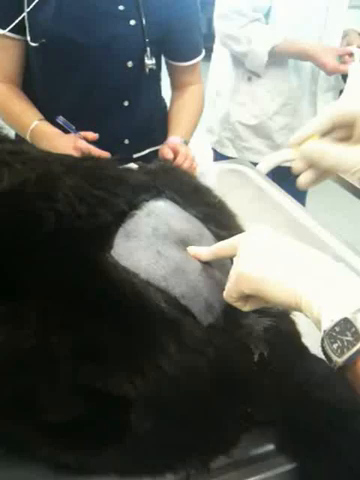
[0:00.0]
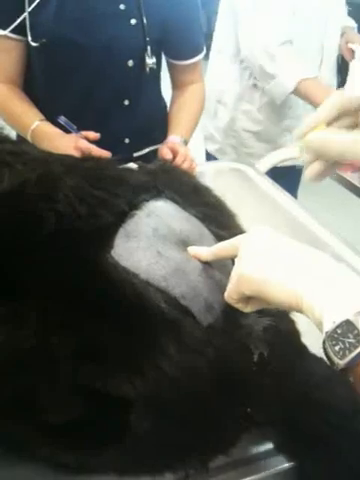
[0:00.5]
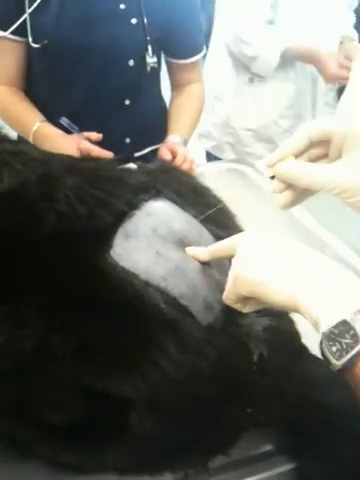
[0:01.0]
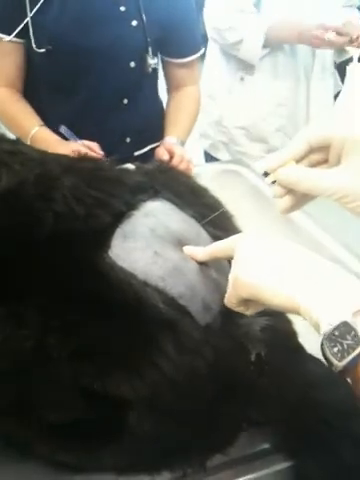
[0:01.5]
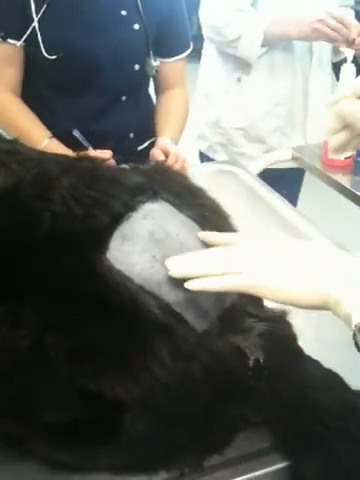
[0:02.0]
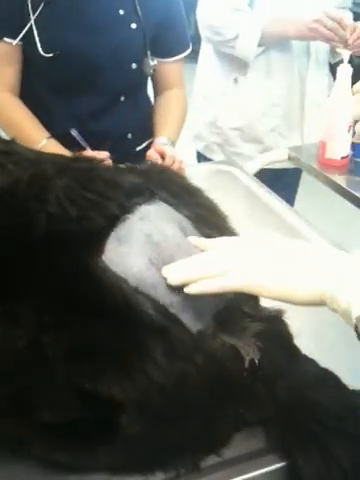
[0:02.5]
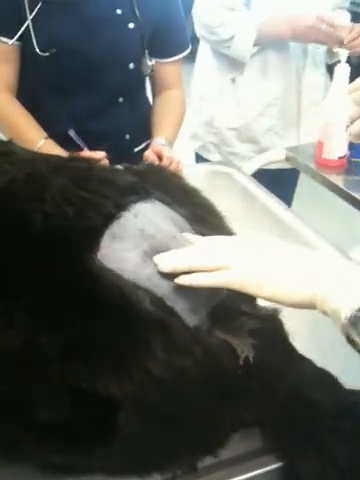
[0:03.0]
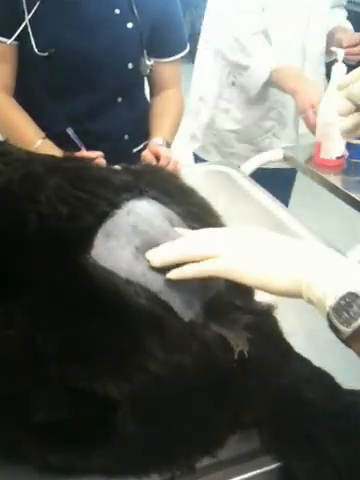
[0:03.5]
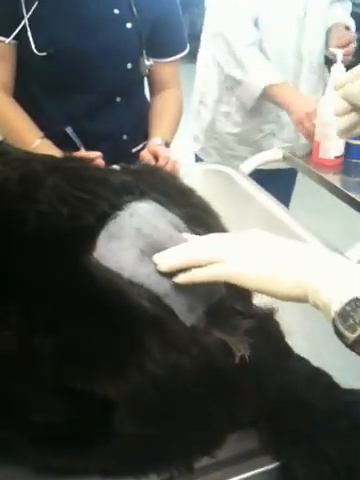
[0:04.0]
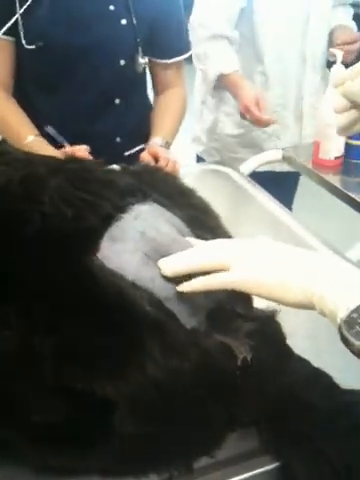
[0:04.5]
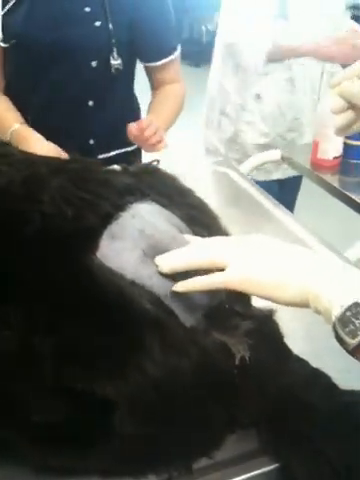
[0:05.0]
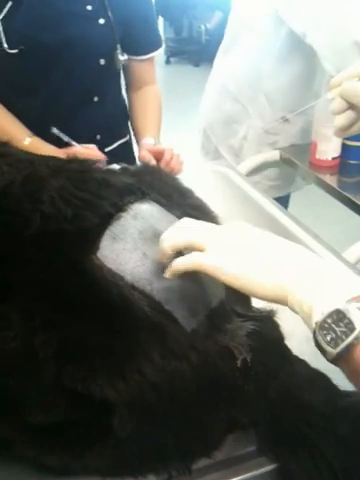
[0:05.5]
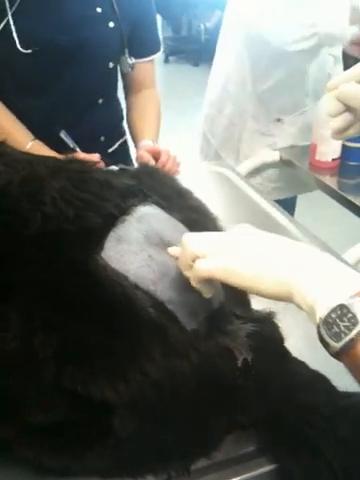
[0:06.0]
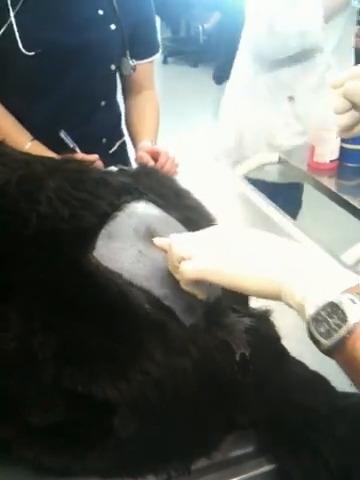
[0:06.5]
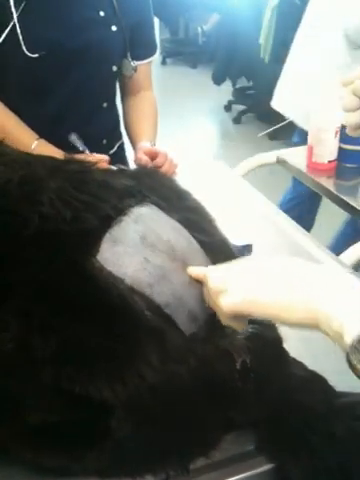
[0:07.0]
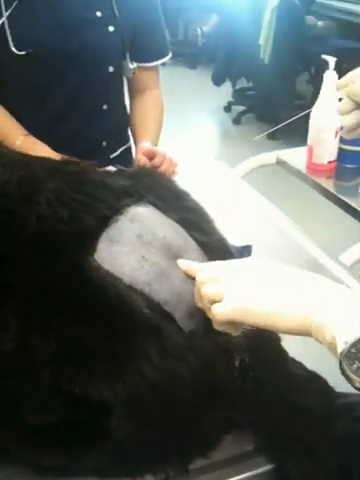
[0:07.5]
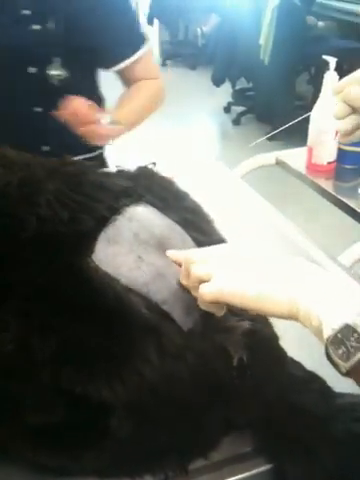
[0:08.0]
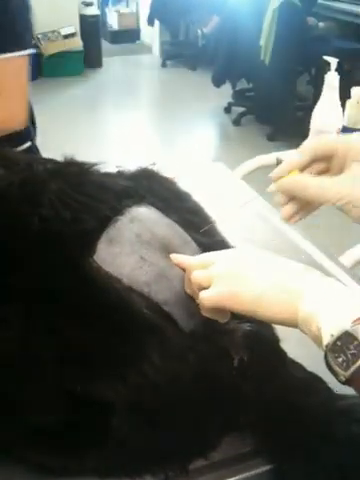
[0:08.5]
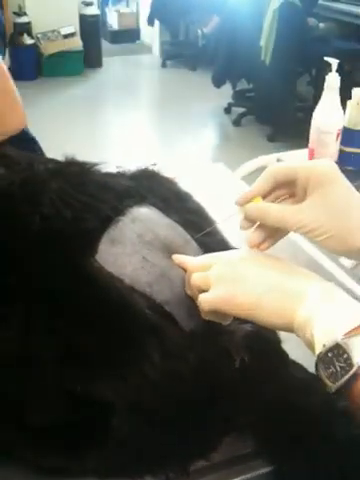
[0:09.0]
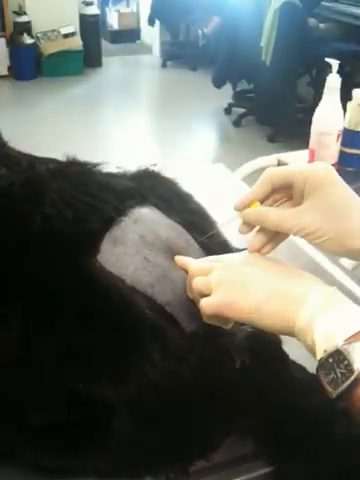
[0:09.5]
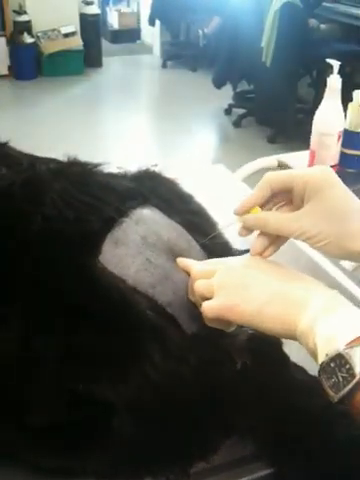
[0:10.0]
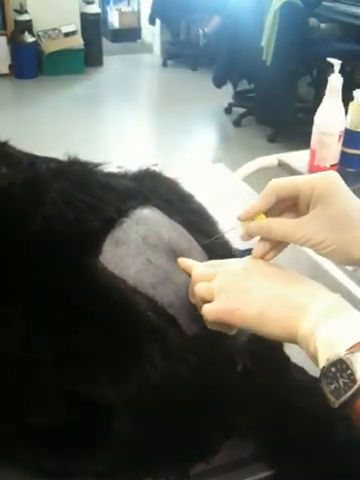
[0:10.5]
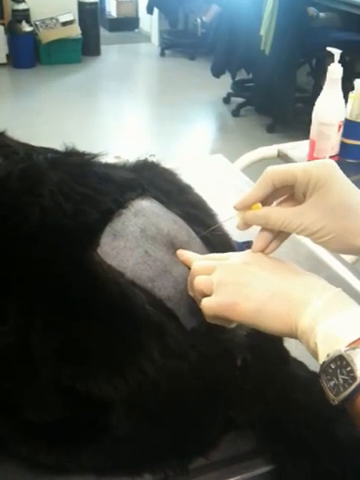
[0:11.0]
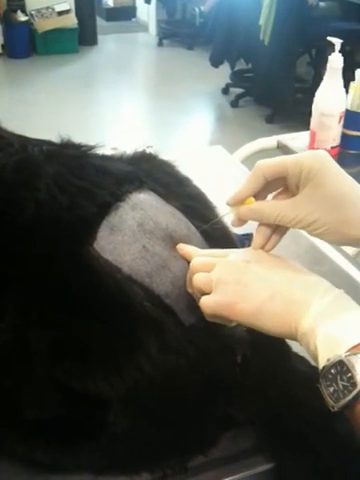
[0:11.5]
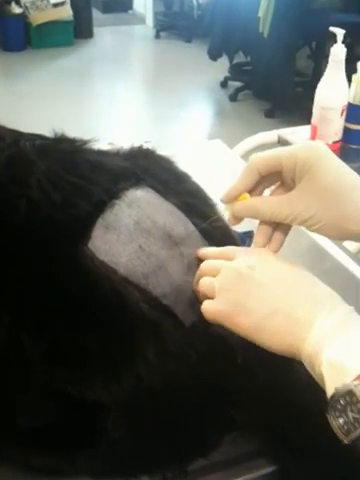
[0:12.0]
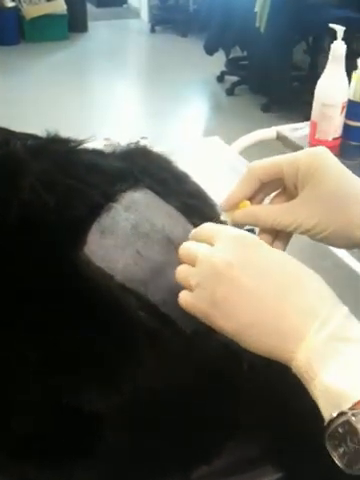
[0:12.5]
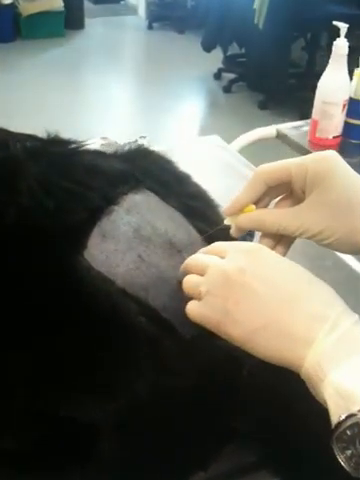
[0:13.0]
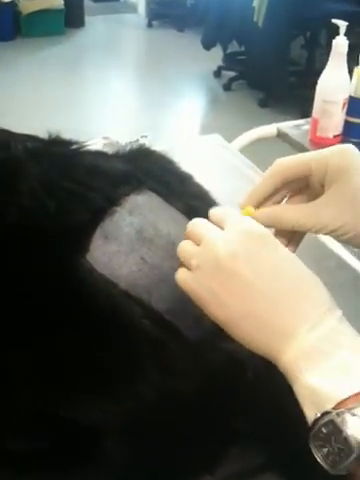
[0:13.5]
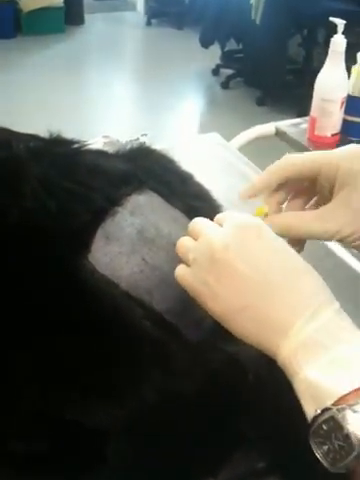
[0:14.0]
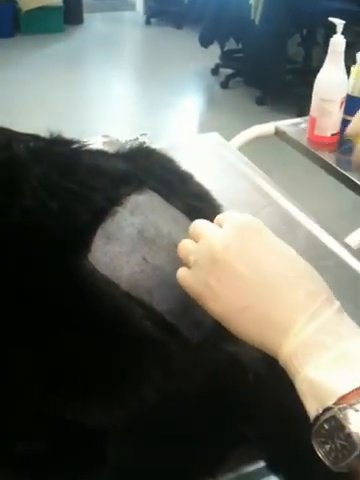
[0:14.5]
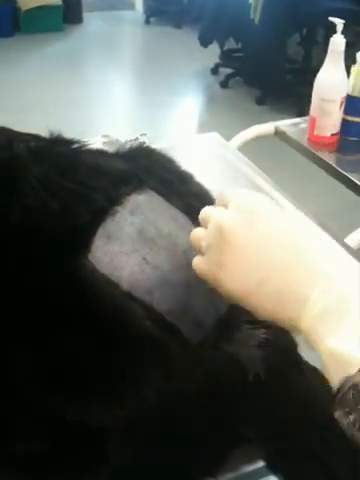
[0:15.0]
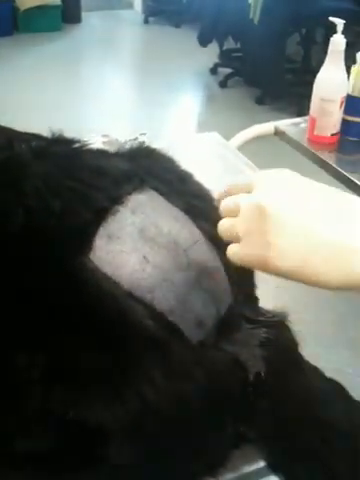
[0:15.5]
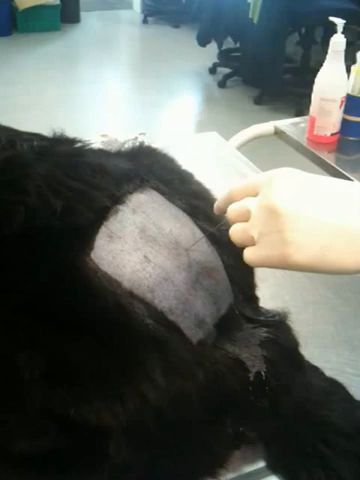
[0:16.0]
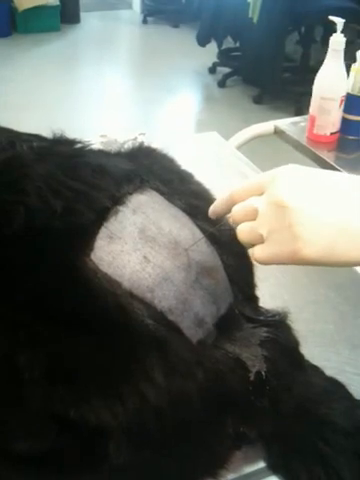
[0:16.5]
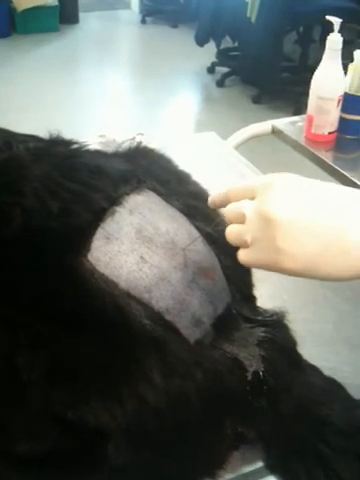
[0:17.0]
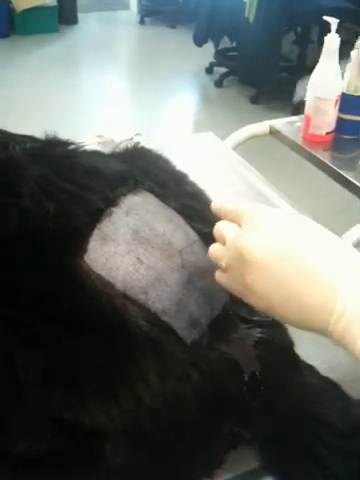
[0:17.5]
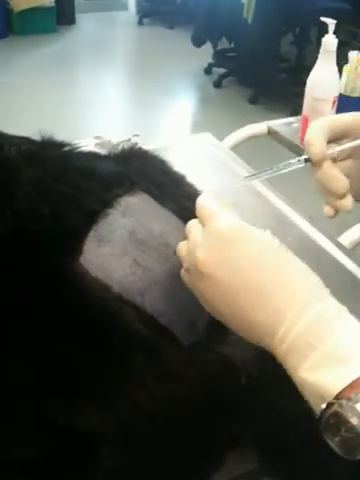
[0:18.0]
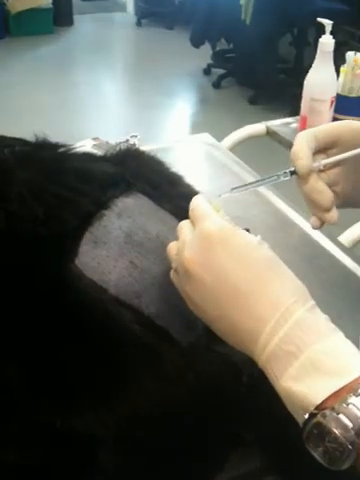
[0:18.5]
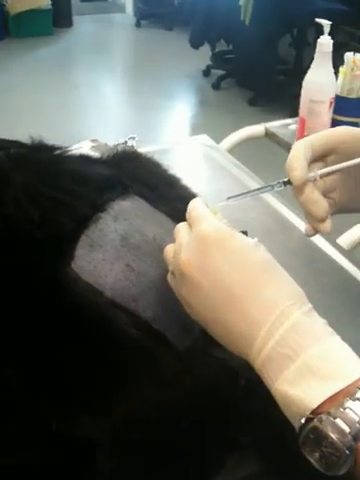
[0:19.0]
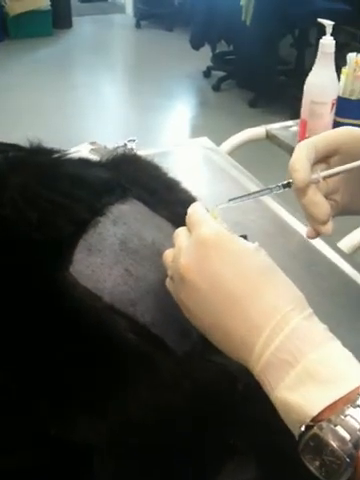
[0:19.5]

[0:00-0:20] An animal lies on a table with a square patch shaved on its hindquarters. The animal has quite long black fur and is possibly a dog. Several members of staff are caring for the animal. A hand in a medical glove pokes at the spot where the injection is to be made and then inserts a long needle into the skin. She then removes it, leaving part of the needle or tube in place. On the other side of the table, a veterinary nurse in a blue uniform with a stethoscope is making notes, and another assistant in a white coat is away from the table. A trolley next to the table holds bottles of fluid and other veterinary equipment.